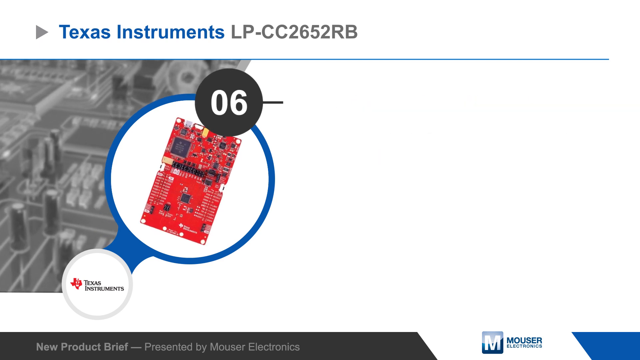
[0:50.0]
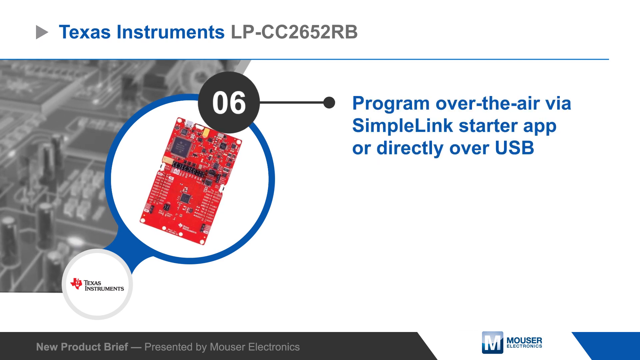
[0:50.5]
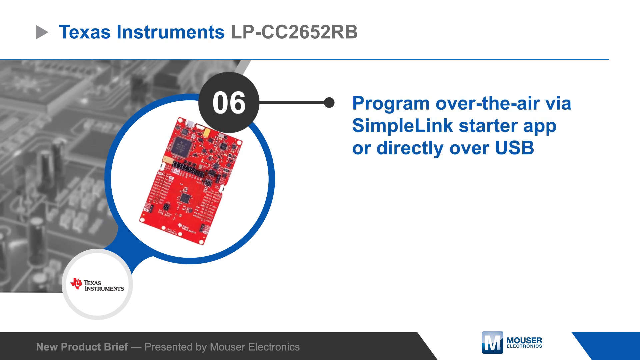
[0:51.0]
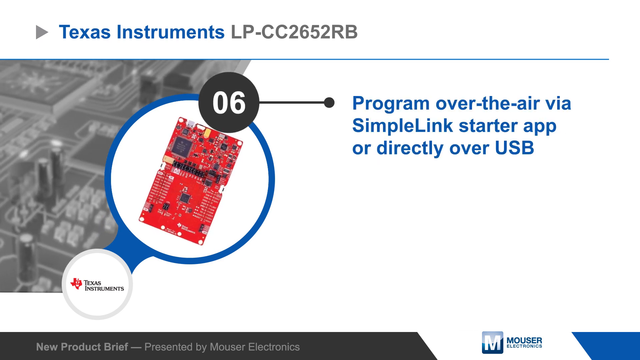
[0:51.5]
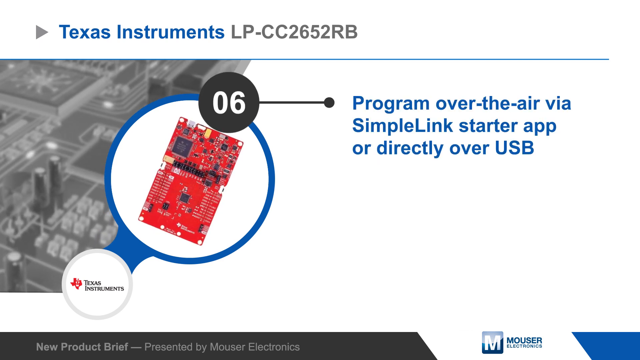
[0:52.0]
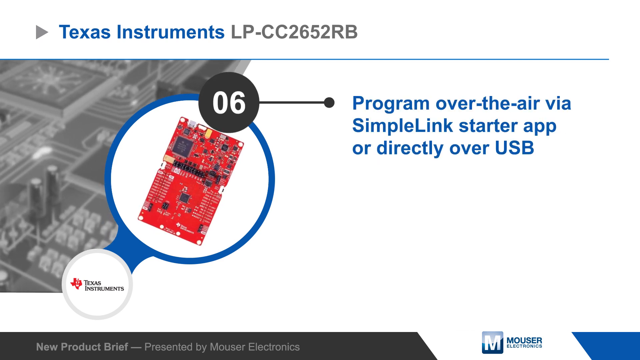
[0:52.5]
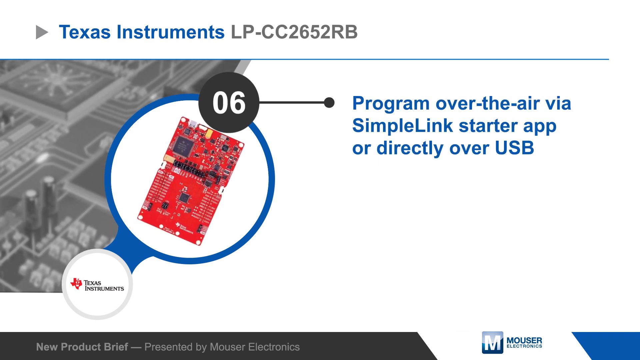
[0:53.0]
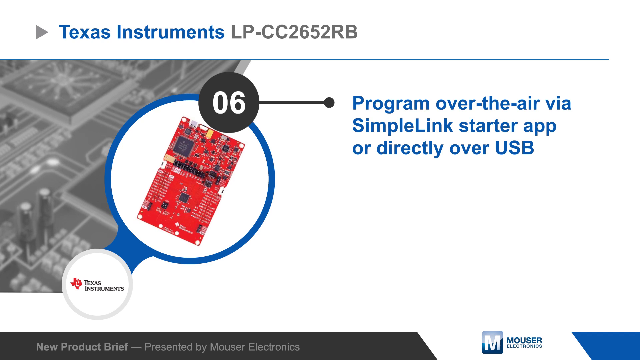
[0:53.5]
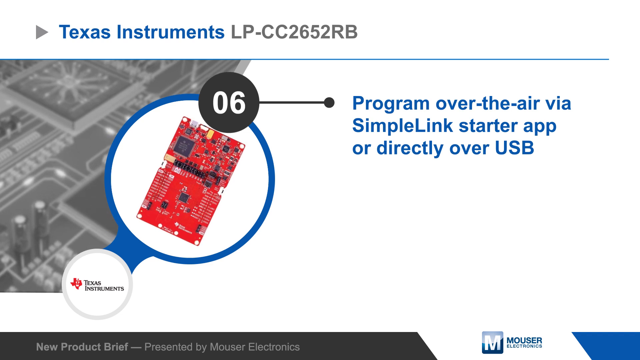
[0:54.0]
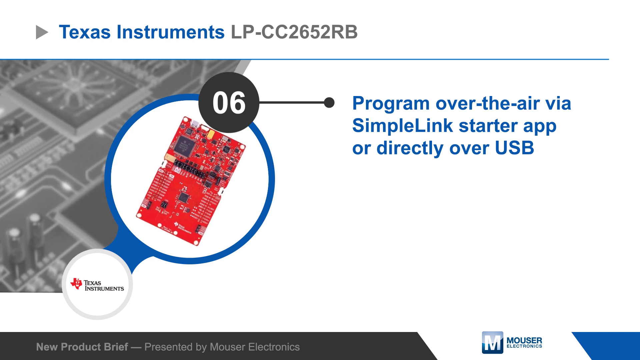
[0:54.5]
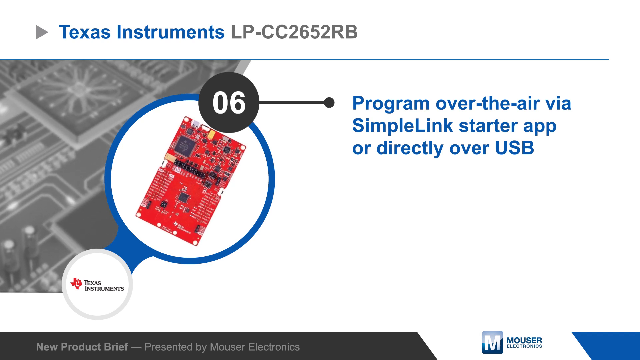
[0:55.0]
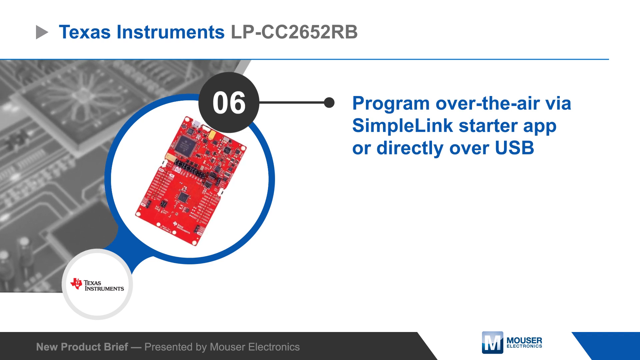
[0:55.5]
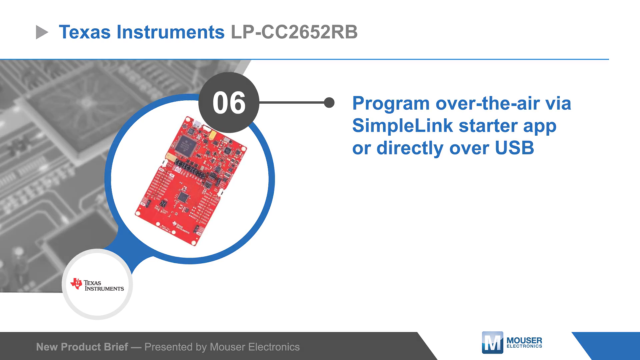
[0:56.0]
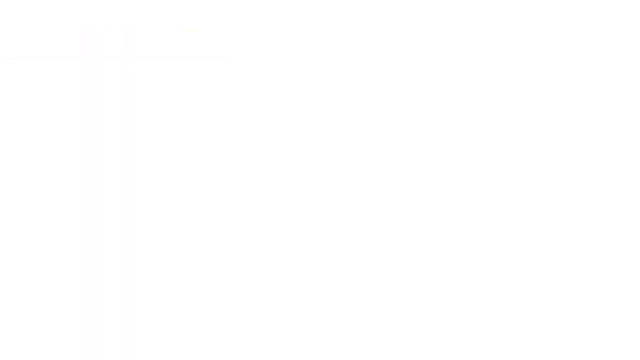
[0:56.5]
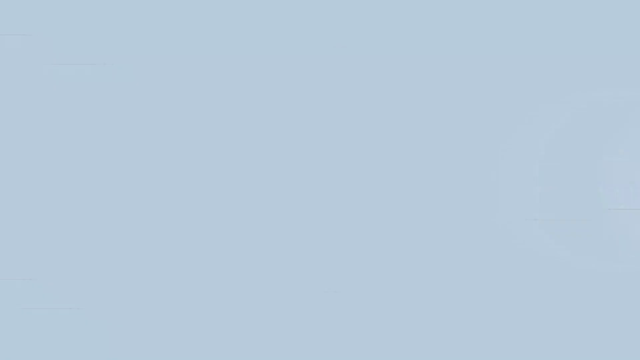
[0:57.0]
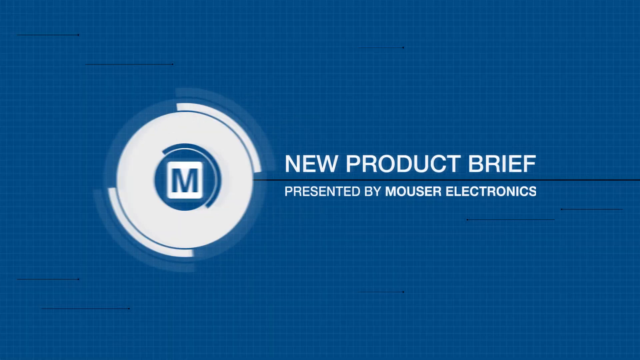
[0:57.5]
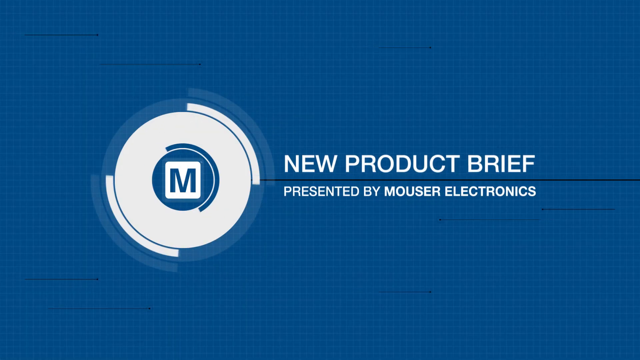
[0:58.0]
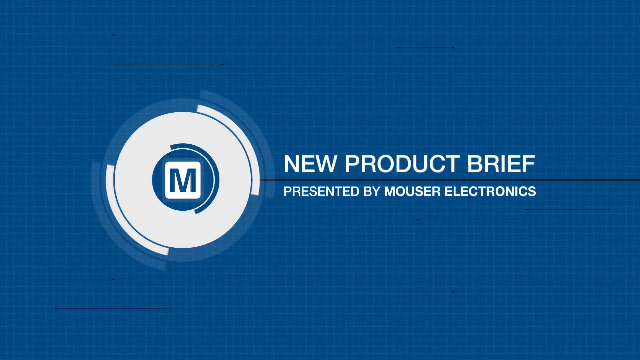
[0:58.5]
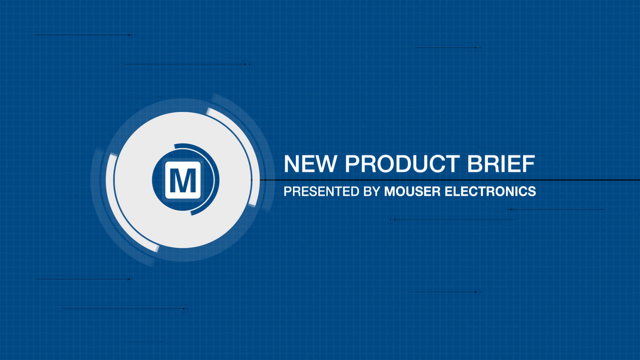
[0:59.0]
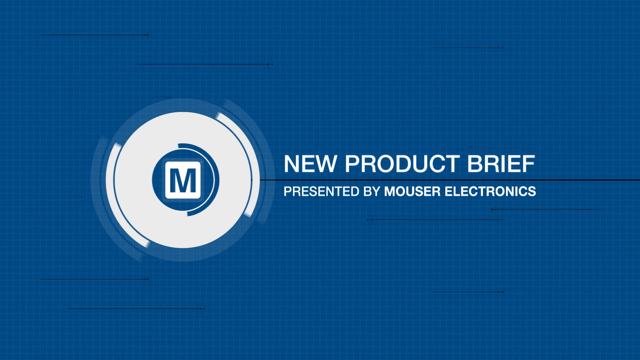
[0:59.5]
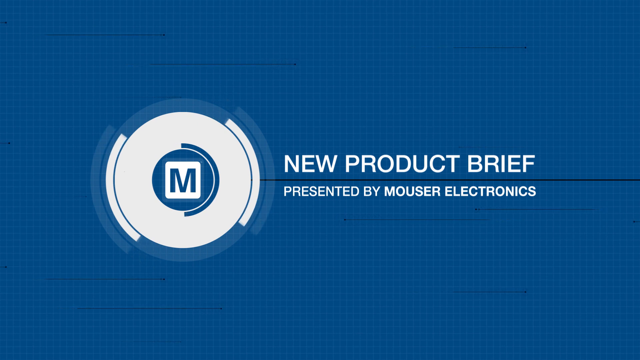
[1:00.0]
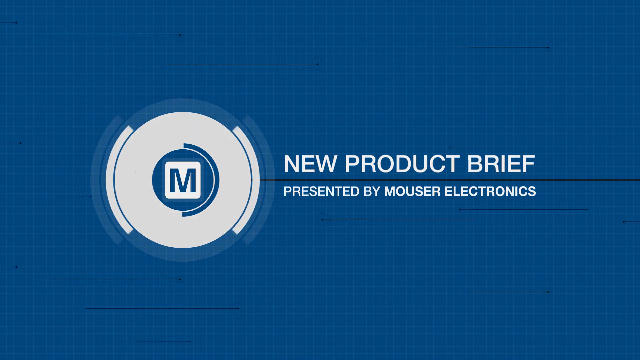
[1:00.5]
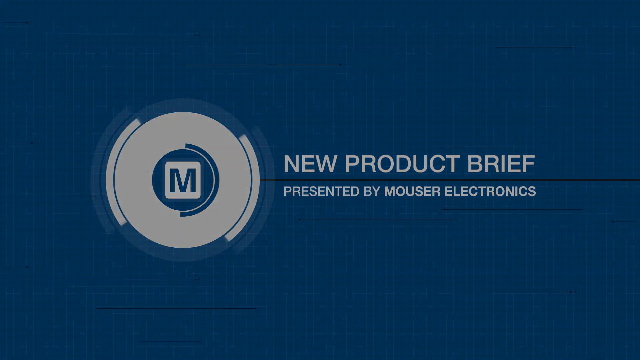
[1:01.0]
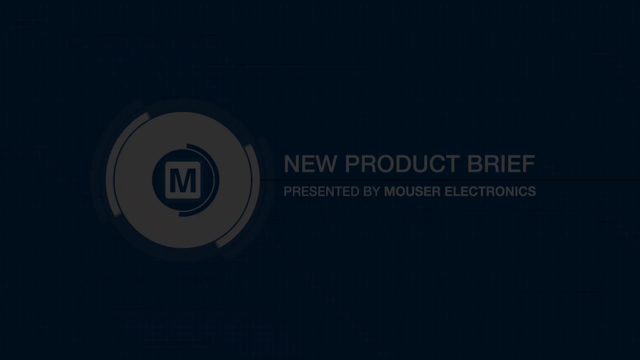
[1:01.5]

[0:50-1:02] Slide number five says "connects to the IBM QuickStart server and other cloud services via MQTT." Slide number six says "program over-the-air by a QuickStarted app or directly over a user's USB." The presentation then ends with a close-up animation of the Mouser Electronics logo inside some circles.